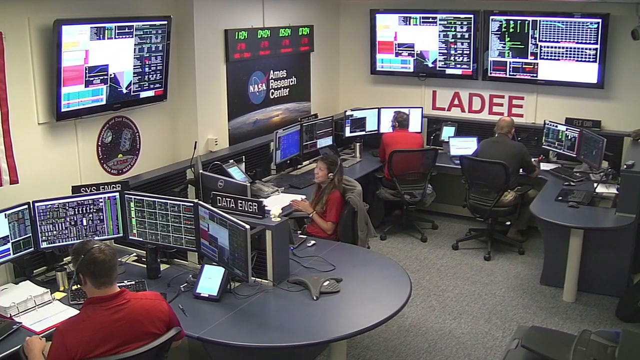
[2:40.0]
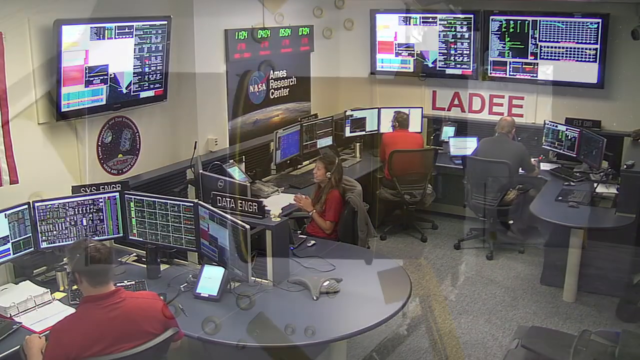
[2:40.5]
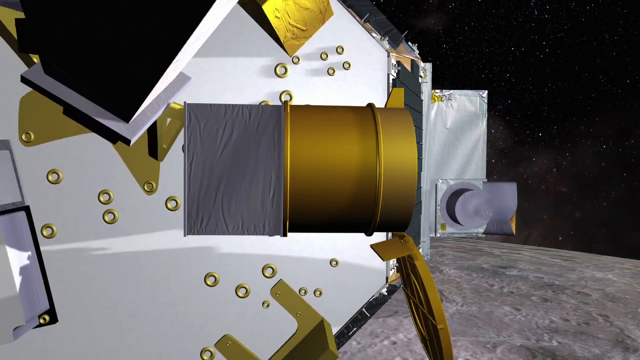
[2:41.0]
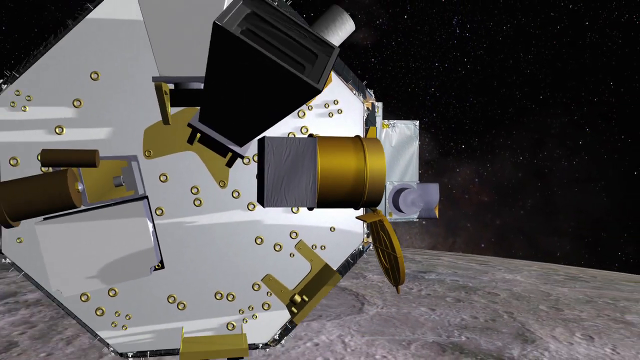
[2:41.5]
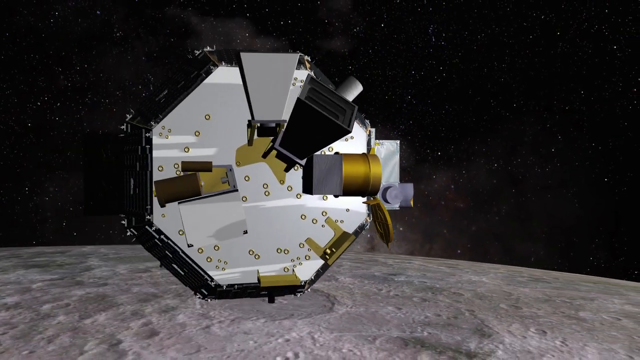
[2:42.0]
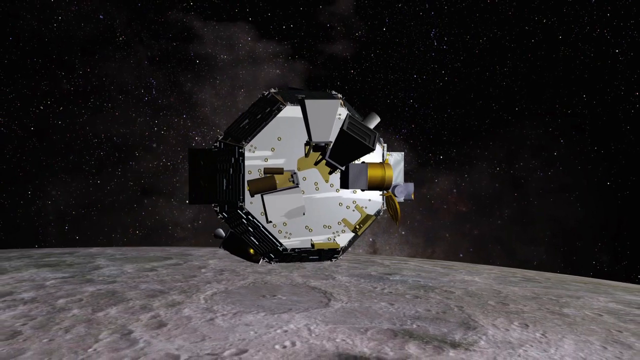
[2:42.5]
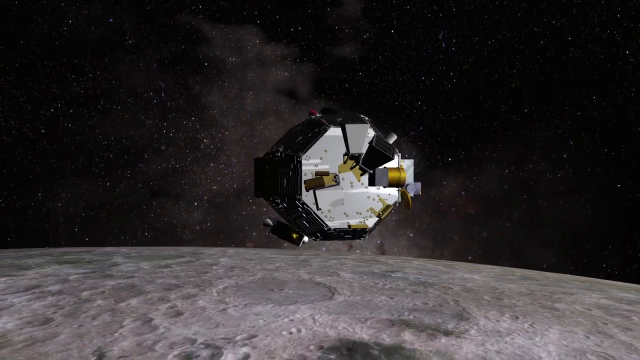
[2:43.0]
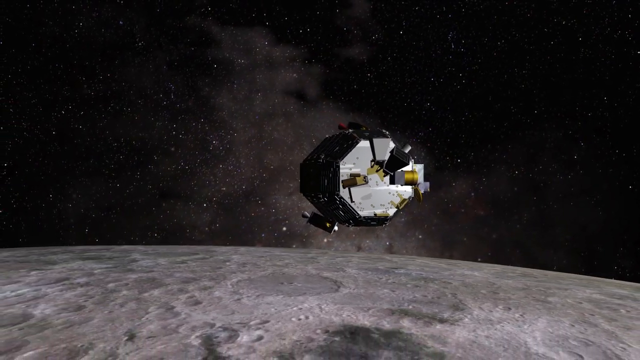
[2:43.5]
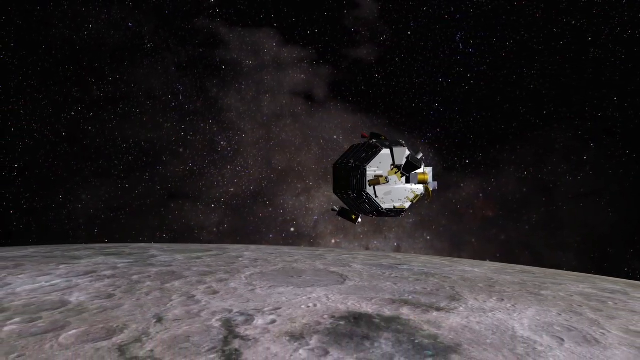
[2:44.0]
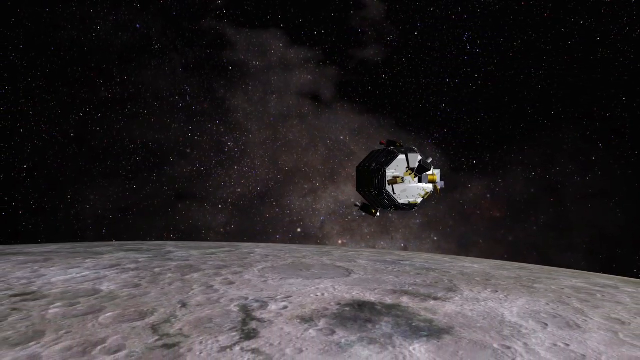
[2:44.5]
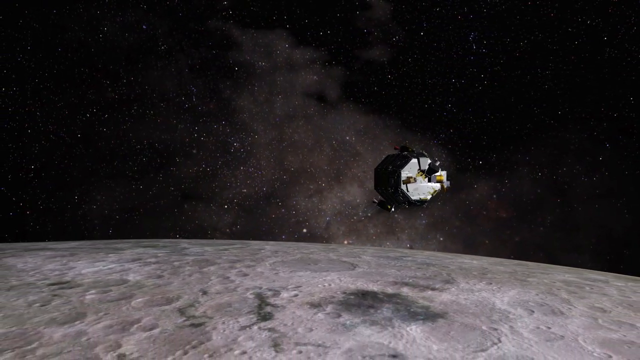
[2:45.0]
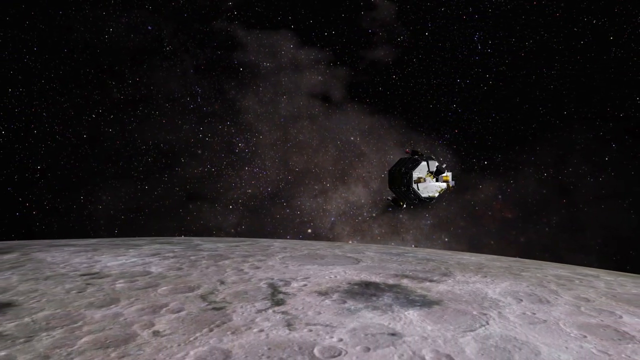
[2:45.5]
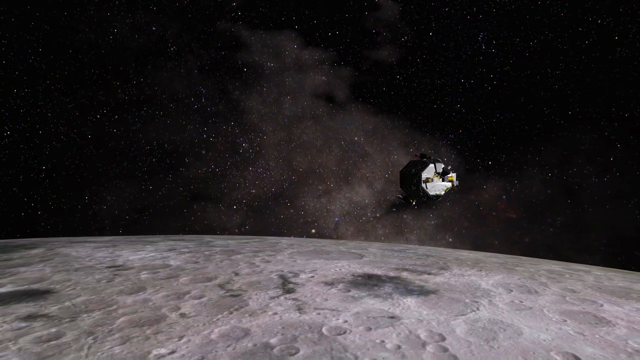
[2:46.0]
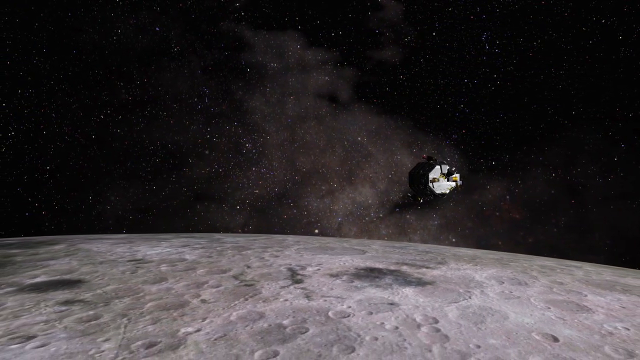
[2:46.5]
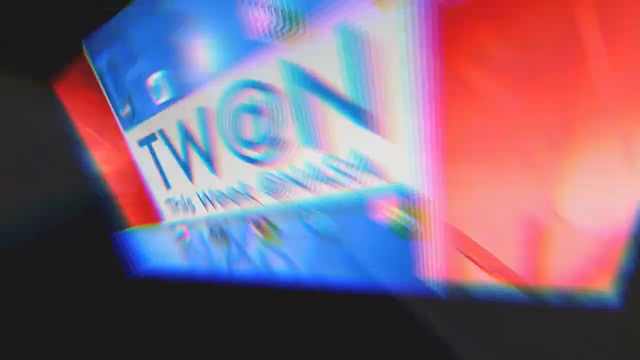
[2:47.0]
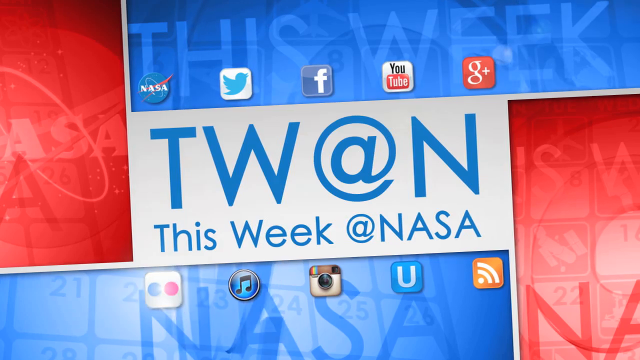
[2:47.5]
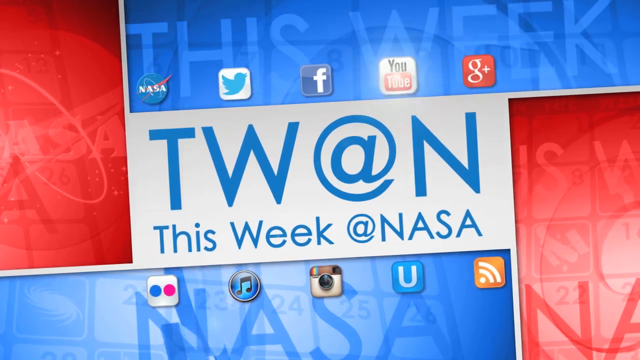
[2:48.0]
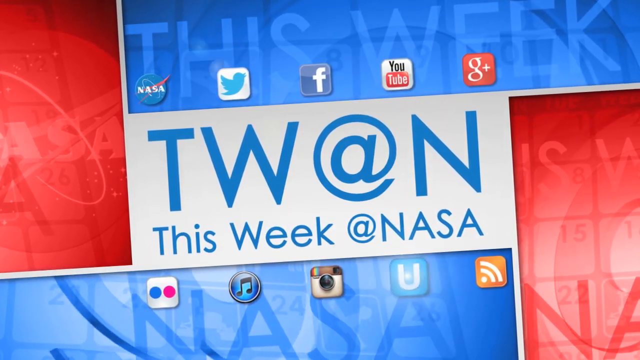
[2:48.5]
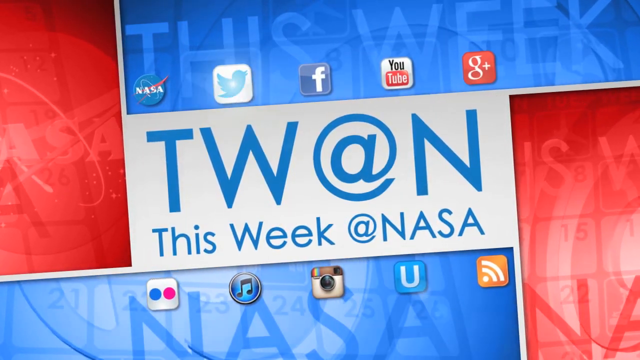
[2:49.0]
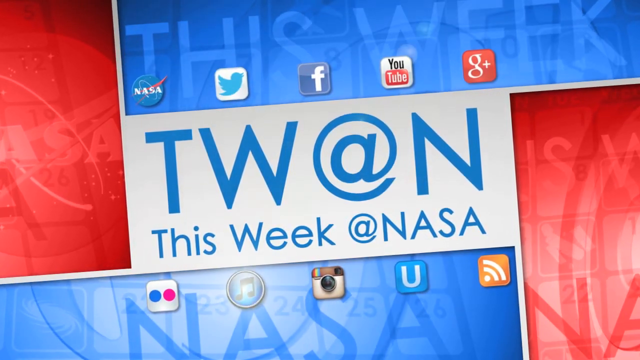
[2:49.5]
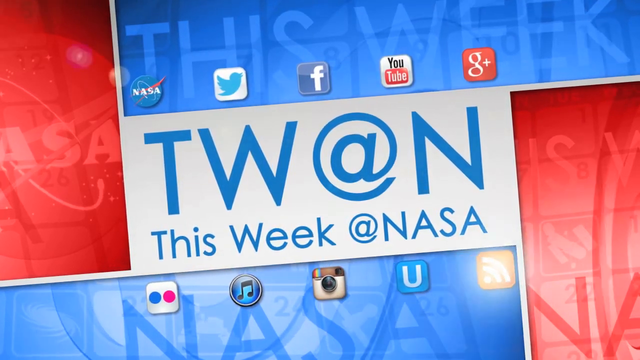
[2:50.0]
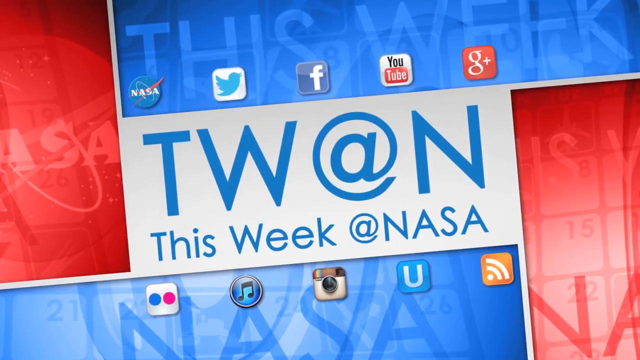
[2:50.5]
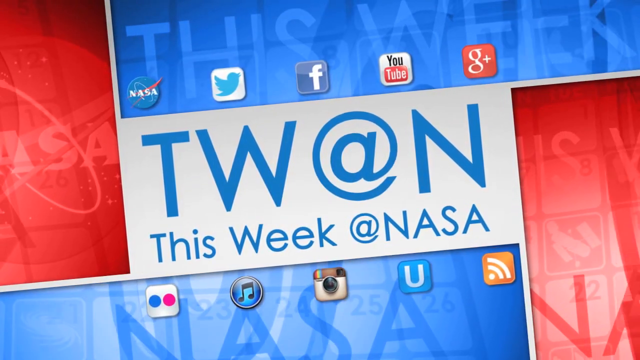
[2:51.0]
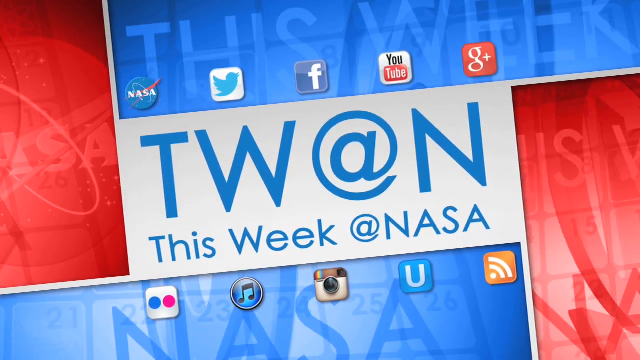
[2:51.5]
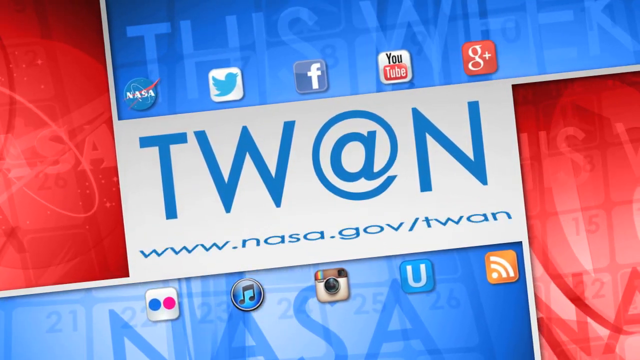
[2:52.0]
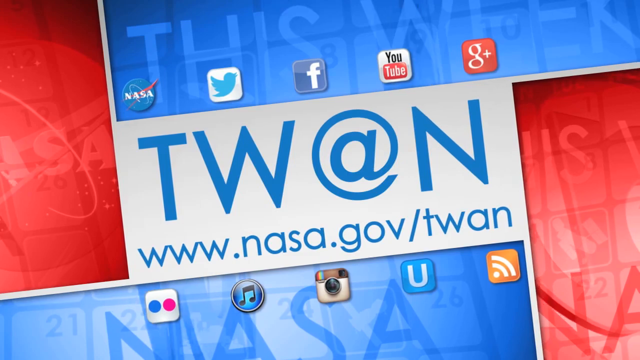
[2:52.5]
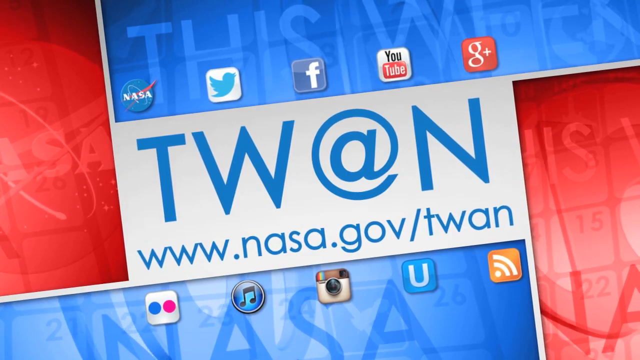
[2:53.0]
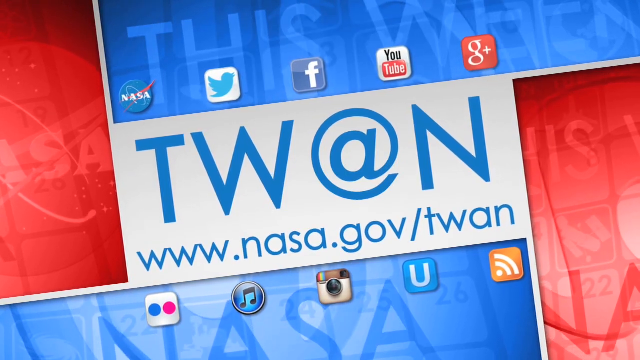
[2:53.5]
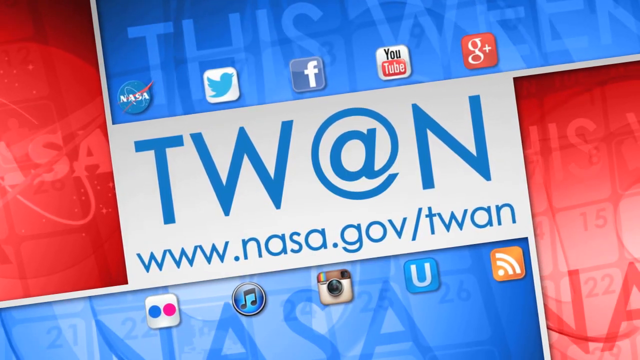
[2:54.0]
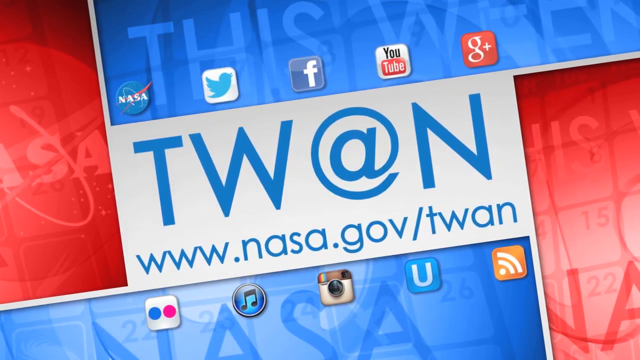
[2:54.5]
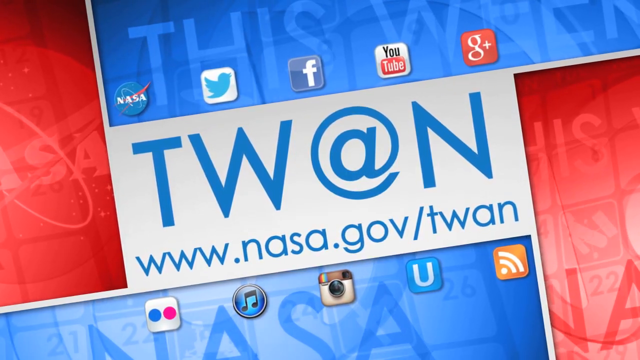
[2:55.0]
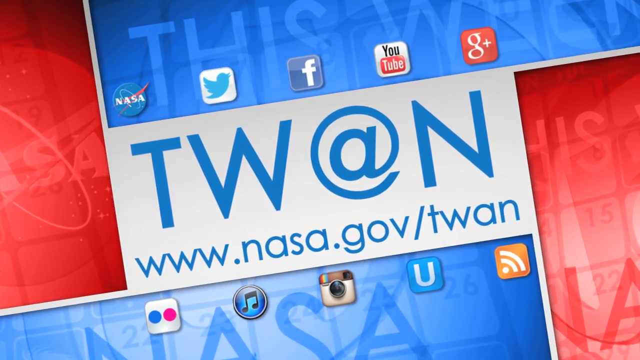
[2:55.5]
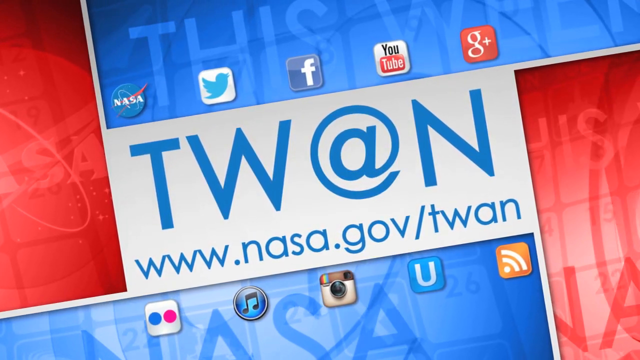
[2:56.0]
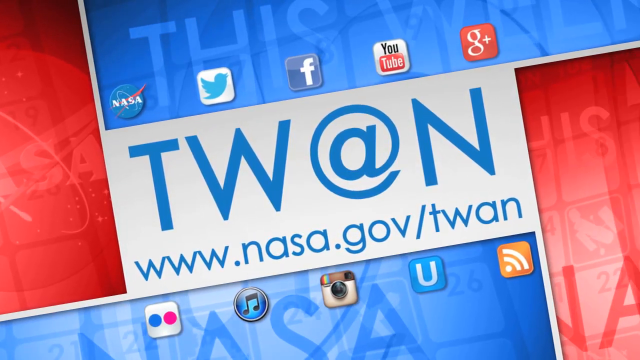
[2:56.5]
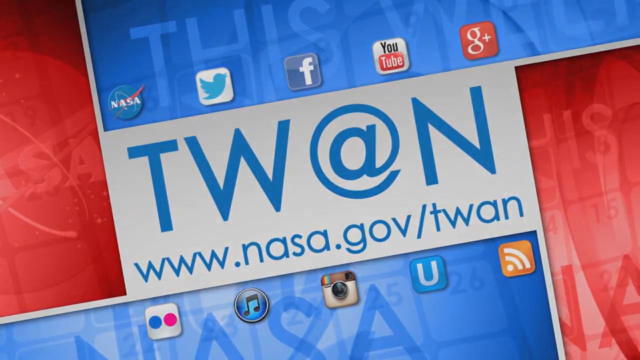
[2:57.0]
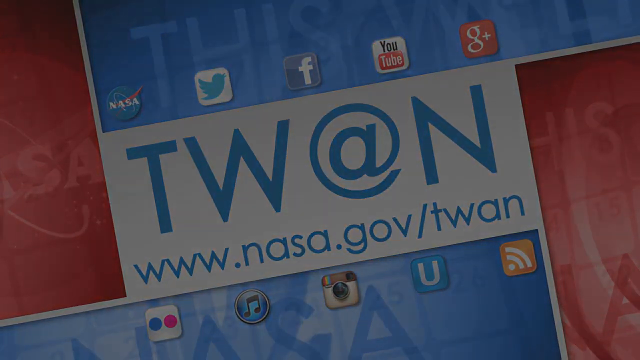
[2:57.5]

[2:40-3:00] NASA employees work in what appears to be some sort of data control station, at workstations fitted together so several people can work in one area. One station has three people working at it, and the station curves around to a fourth man. One station says "system engineer" and one says "data engineer". TV screens over the top present lots of data, and the employees have multiple computer screens in front of them. They are at the LADEE NASA center, the Ames Research Center. The view then zooms in to a computer-generated drawing of a satellite orbiting the Earth. It then returns to the "TW at N" / "this week at NASA" screen with the app icons again surrounding the logo: NASA, Twitter, Facebook, YouTube, Google Plus, the music icon, Instagram and something like a Wi-Fi icon.